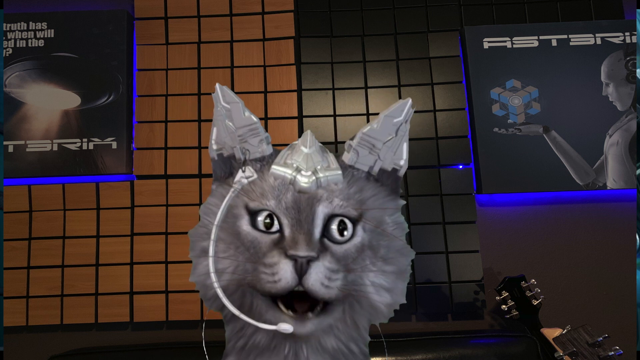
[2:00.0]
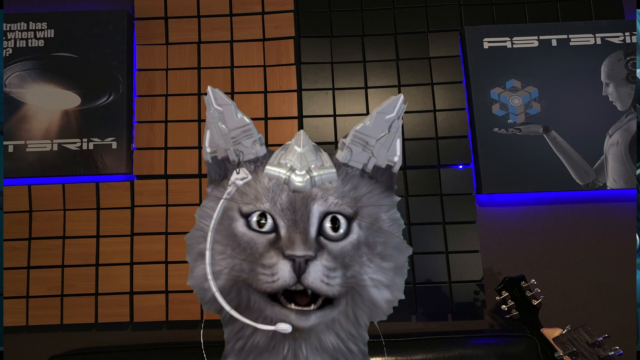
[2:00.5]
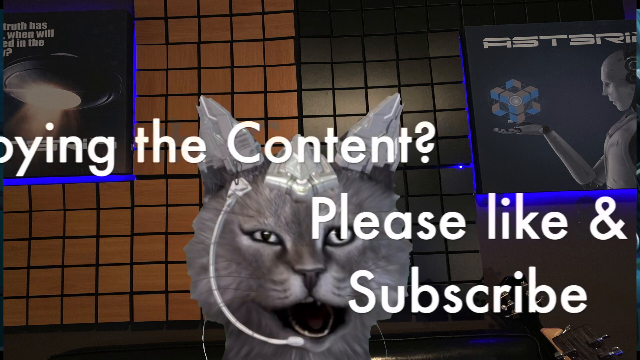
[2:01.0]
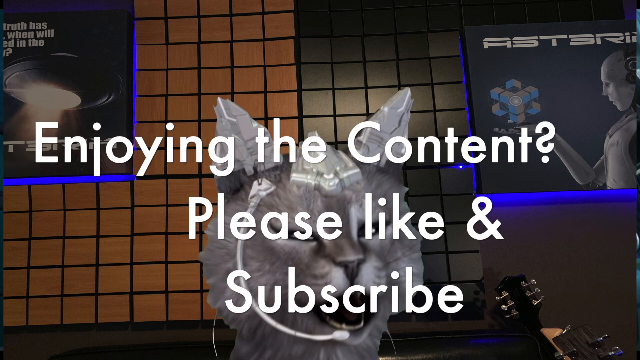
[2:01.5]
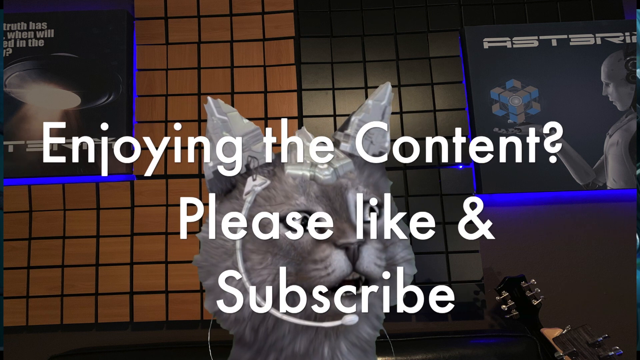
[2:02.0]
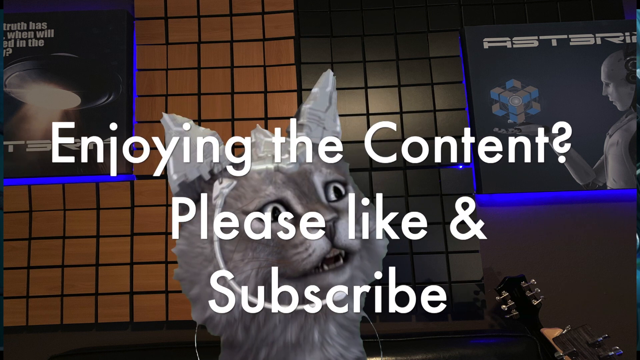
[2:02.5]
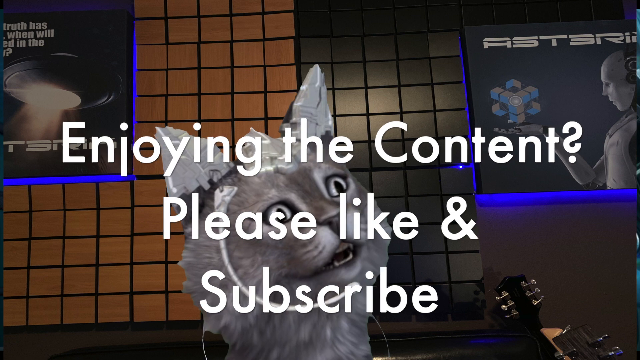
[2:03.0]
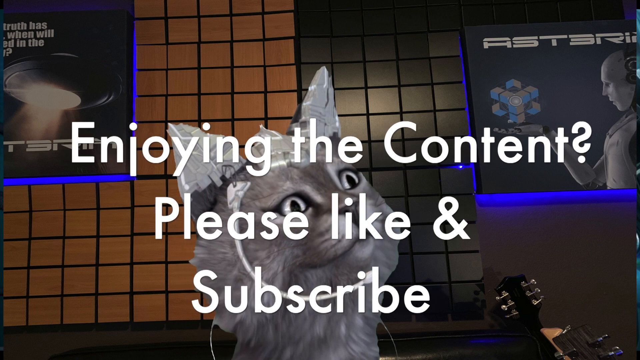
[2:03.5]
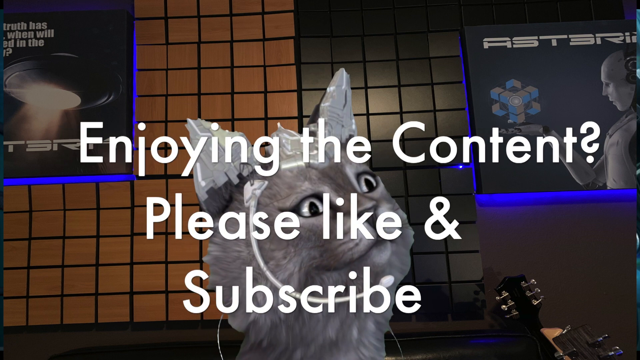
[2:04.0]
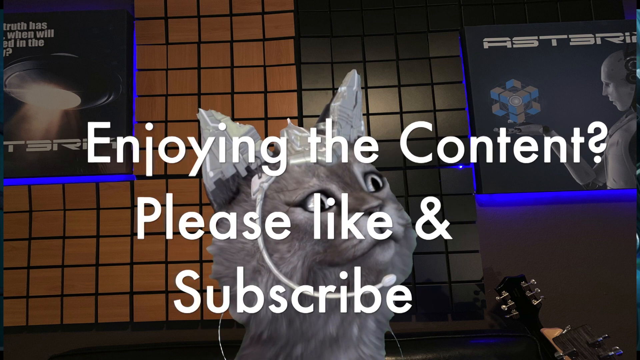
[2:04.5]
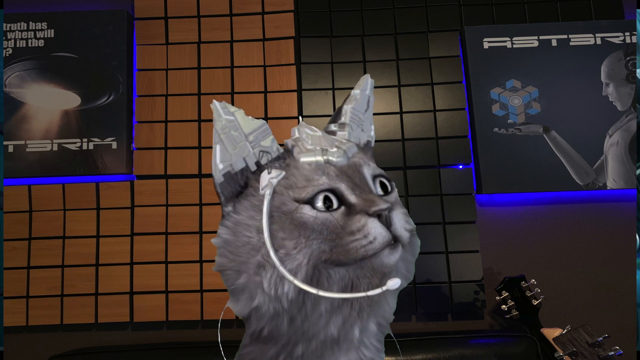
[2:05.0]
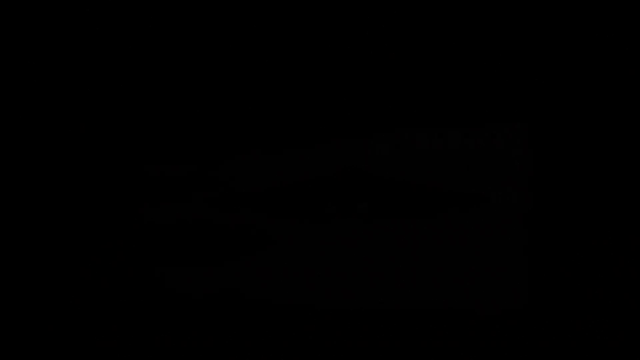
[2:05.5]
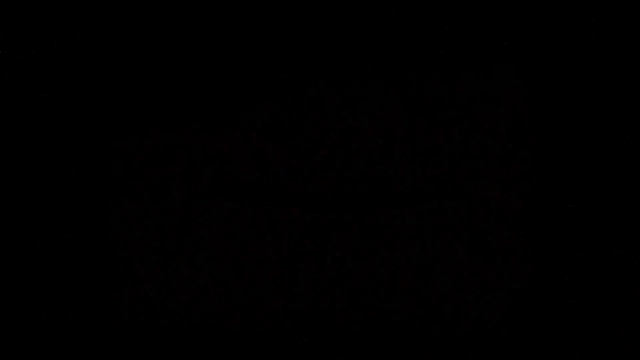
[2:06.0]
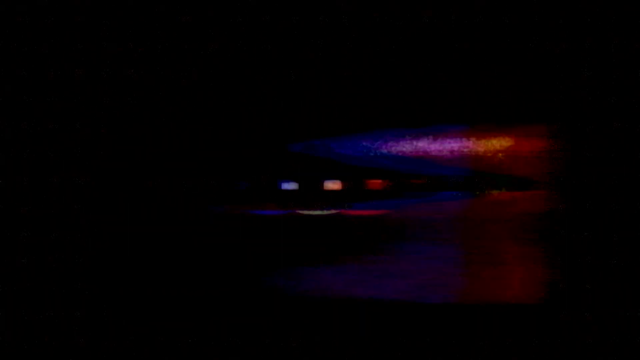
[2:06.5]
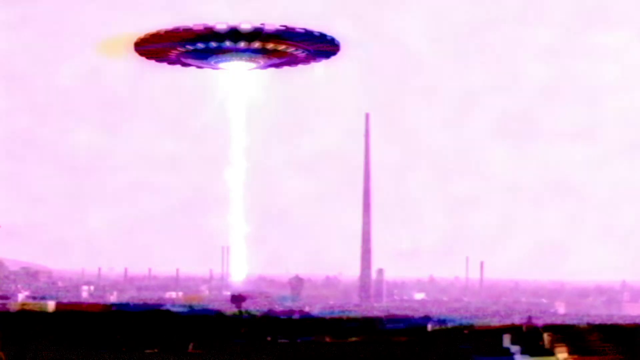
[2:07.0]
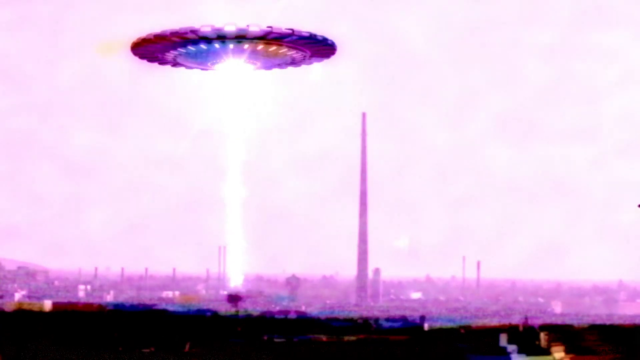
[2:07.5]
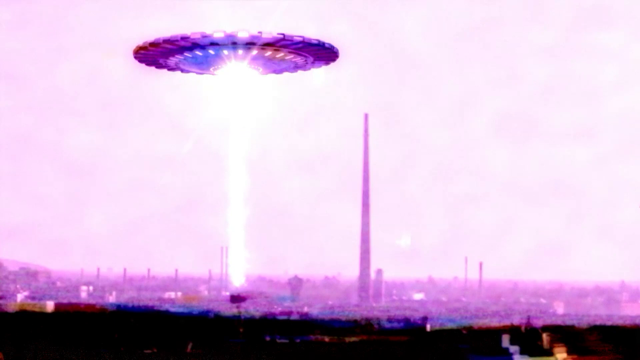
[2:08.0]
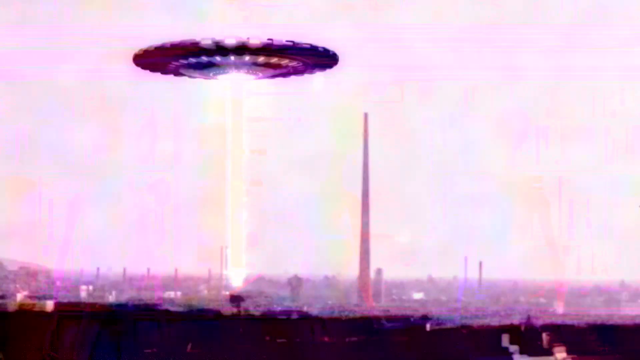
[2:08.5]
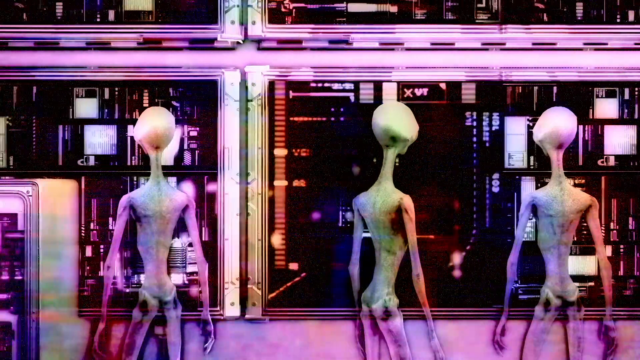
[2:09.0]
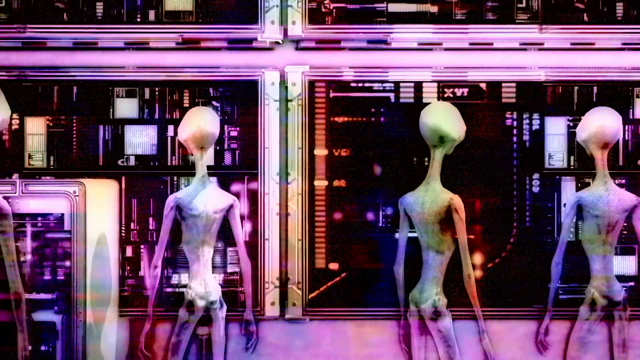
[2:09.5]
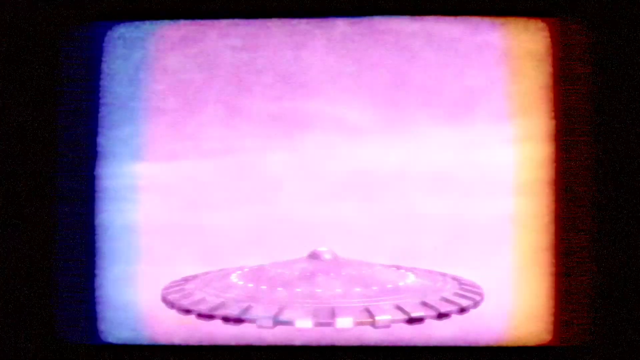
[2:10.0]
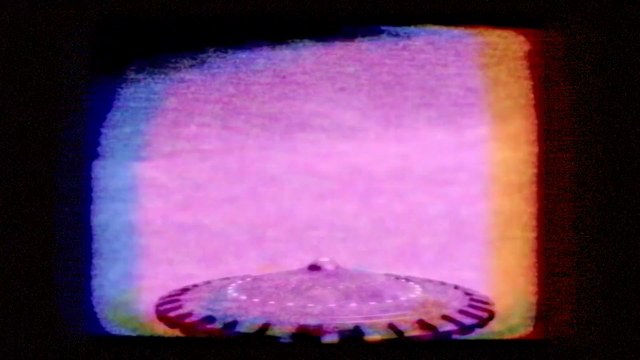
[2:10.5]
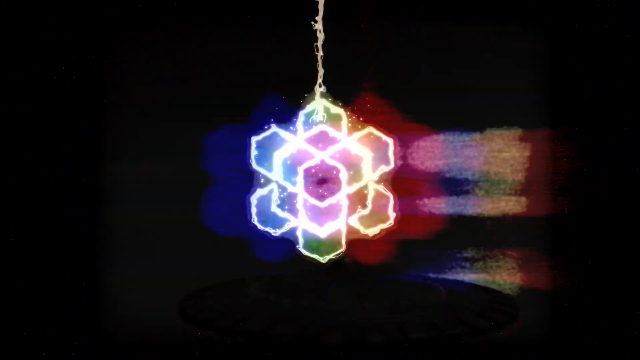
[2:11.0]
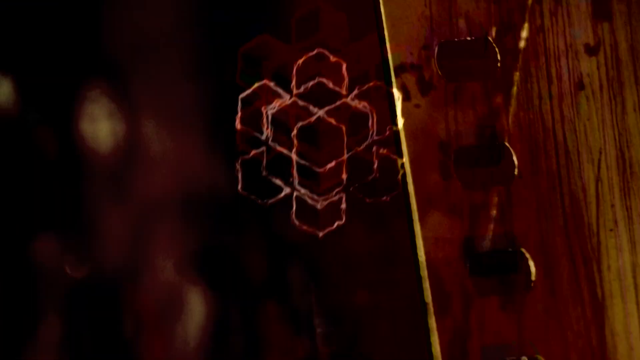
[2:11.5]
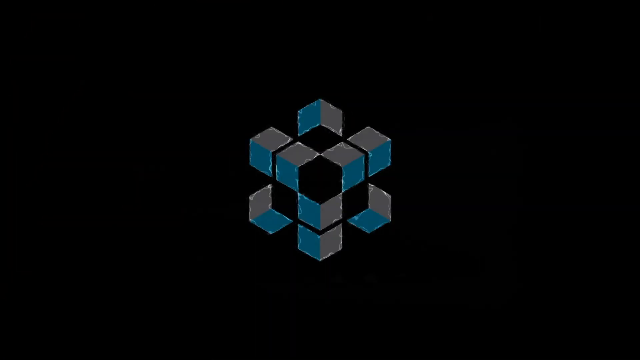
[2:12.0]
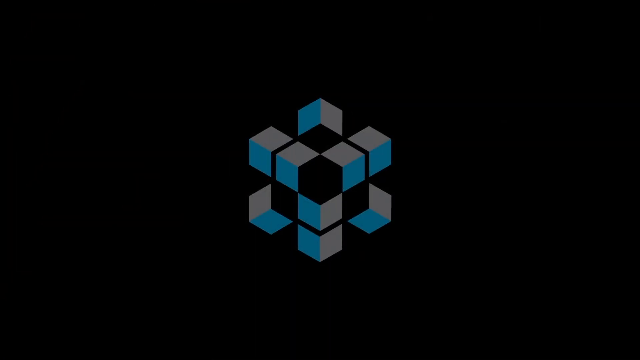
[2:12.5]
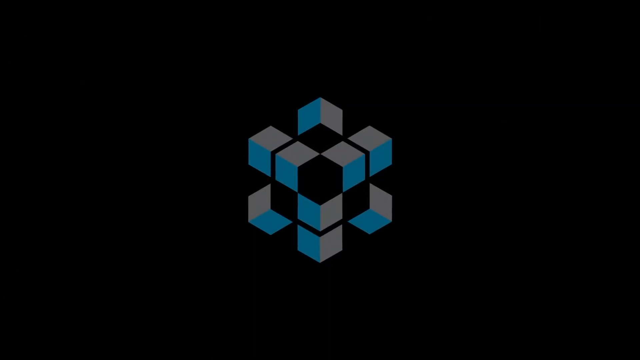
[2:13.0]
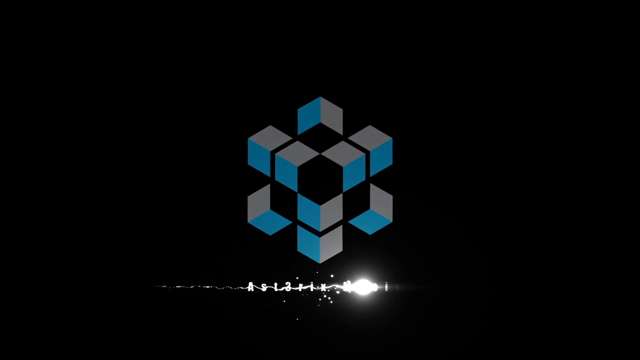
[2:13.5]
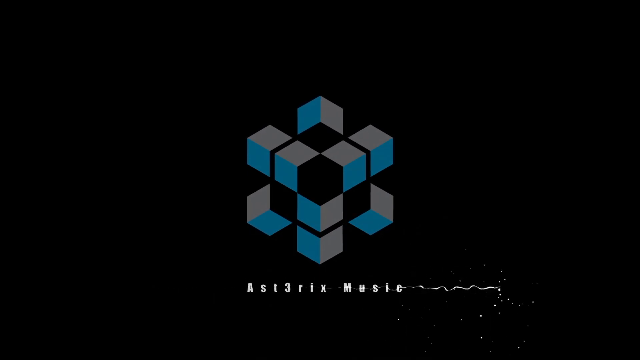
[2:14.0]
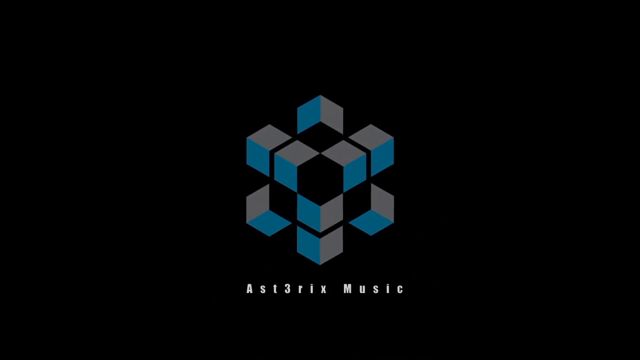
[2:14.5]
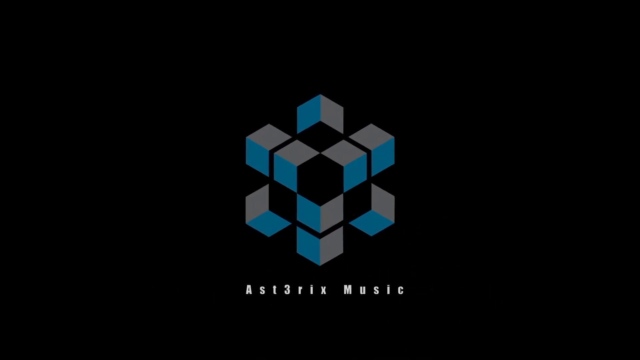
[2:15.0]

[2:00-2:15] The cat continues to talk, and the words "enjoying the content, please like and subscribe" enter the frame from the left and the right with animated transitions, appearing over the cat's face as it continues to speak with animated facial expressions, looking to the left and to the right. The words then exit the screen in the same way they entered, and the screen fades to black. A montage of different clips of UFOs follows, with a static effect: UFOs flying, a UFO over a city beaming a laser down, some aliens in a wacky design, and another static UFO. The logo that appeared at the beginning of the video appears once again, with the bit of lightning striking it, and stabilizes, and the words "asterix music" appear underneath it, with a three in place of the E. This is presumably a YouTube tutorial by a channel called Asterix Music about some kind of music software.